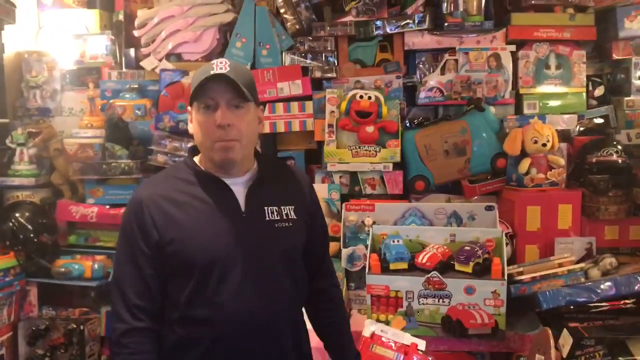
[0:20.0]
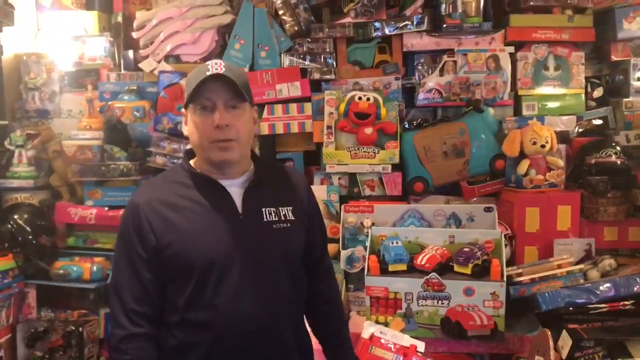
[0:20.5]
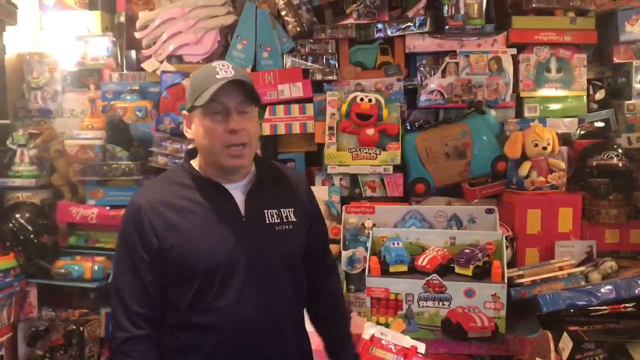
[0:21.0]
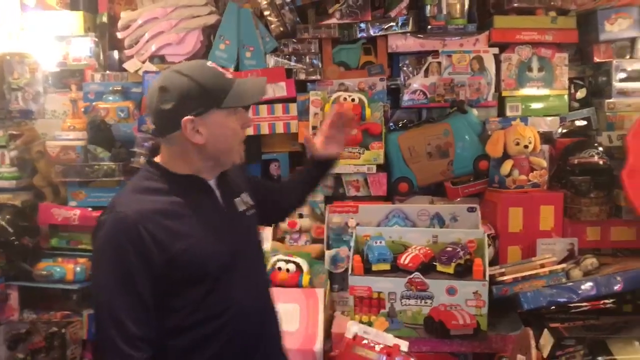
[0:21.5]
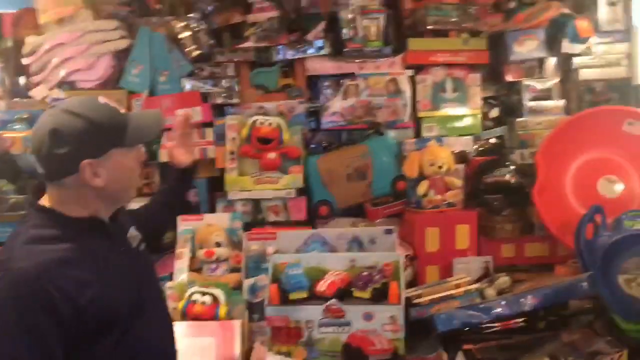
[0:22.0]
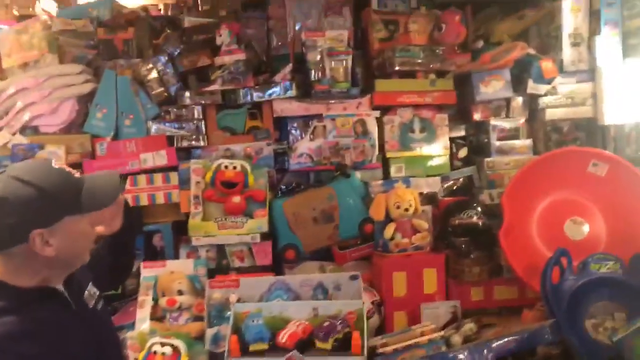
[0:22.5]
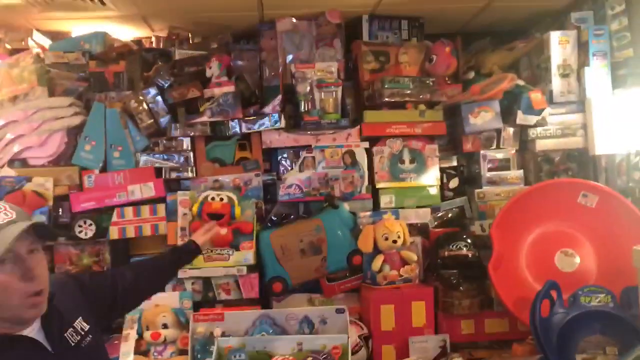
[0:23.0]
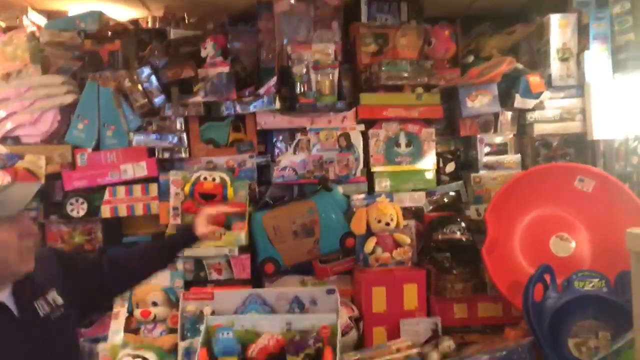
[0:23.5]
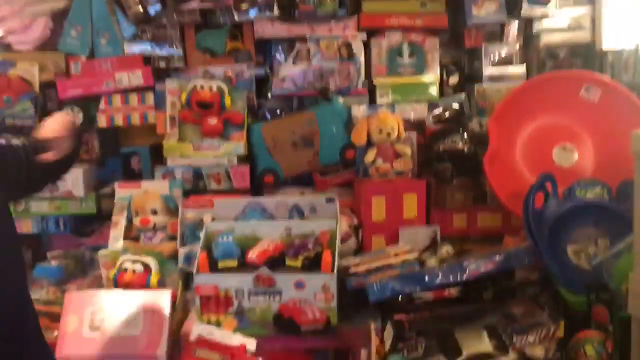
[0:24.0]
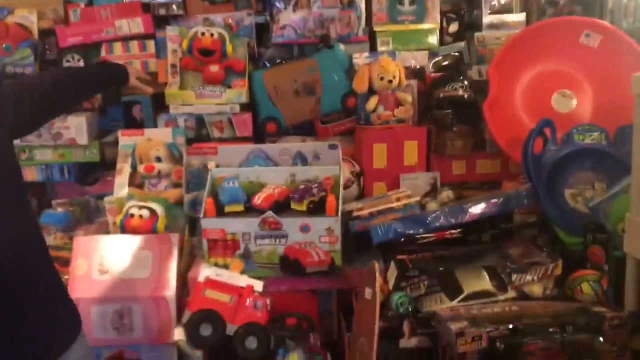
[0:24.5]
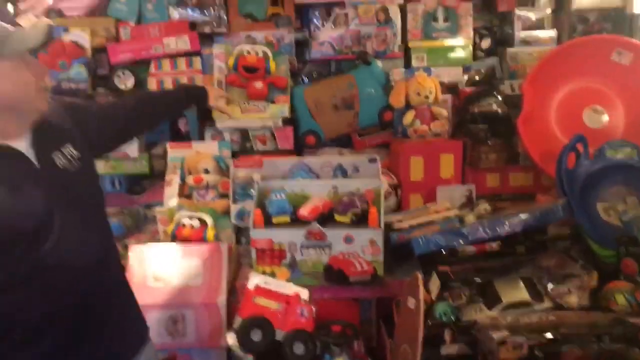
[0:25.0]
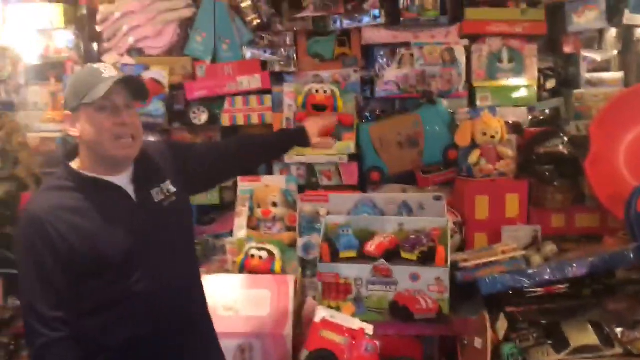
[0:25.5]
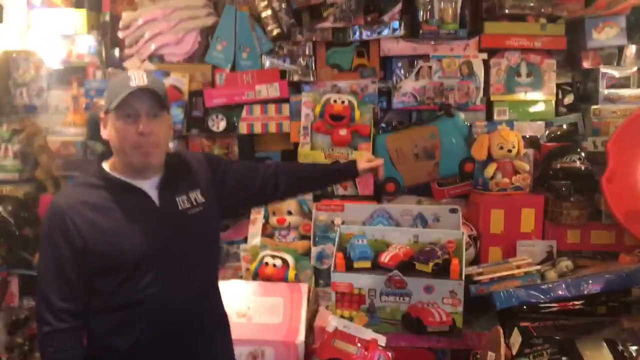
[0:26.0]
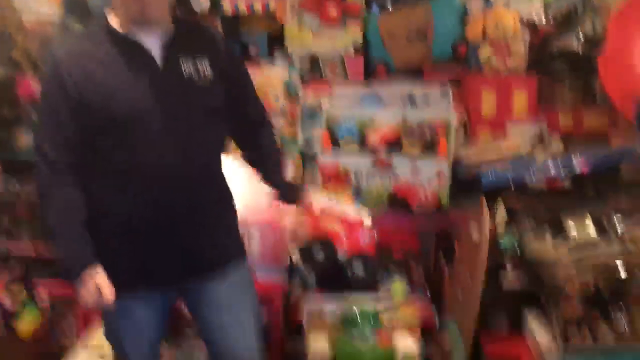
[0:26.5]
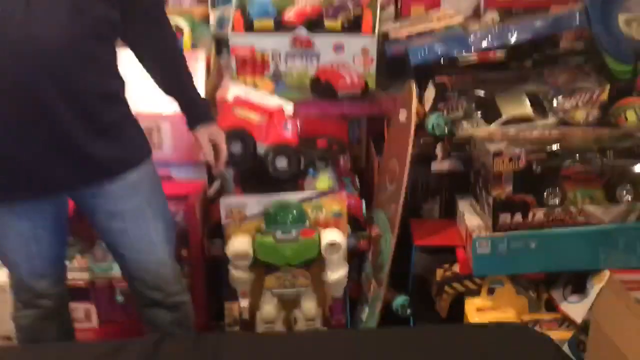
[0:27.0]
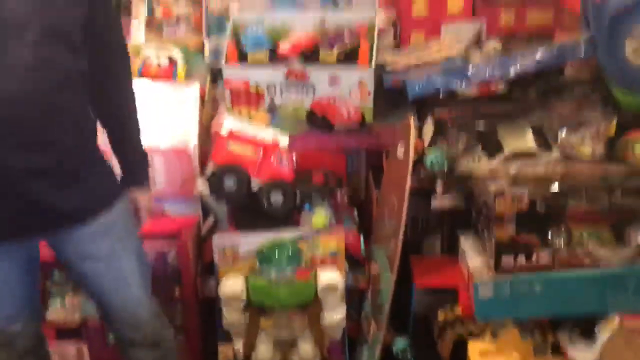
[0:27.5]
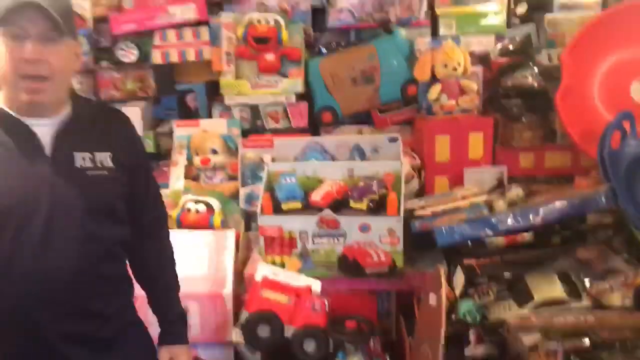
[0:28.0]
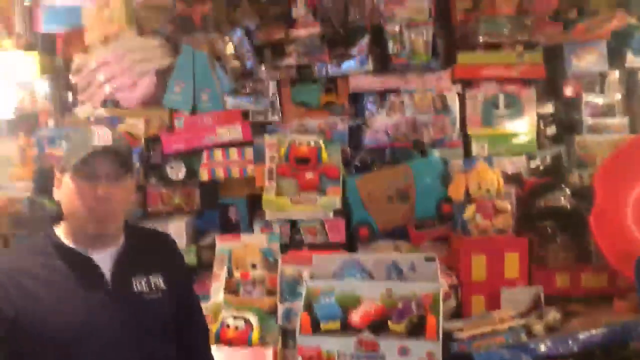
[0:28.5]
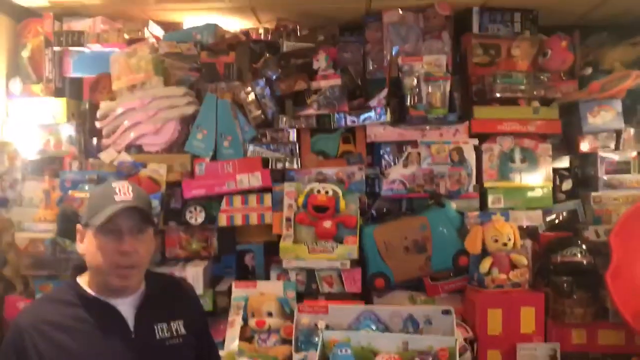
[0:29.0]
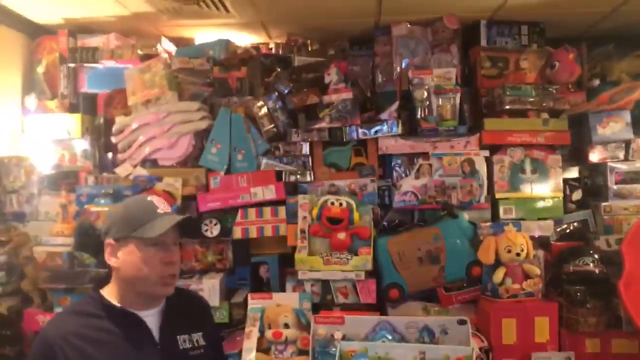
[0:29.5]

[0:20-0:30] The camera turns a little, and the man starts pointing to a particular area. There appears to be a Doc McStuffins toy, which looks like a white van, like a vet mobile. Underneath it appears to be a large blue van with blue wheels and black tires, to the right, sandwiched between the Elmo with headphones and the one with the dog. On the far right there is apparently a window, with light shining in, and just to the left of the window is a tall white box that is fairly bright. The camera zooms back out, looking at the cars in front. Another Elmo is sitting tucked behind the pink box. The man speaks and looks down for a moment; there is almost like a green Transformers on the ground in front of him. The camera moves up and down, almost as if on a boat.